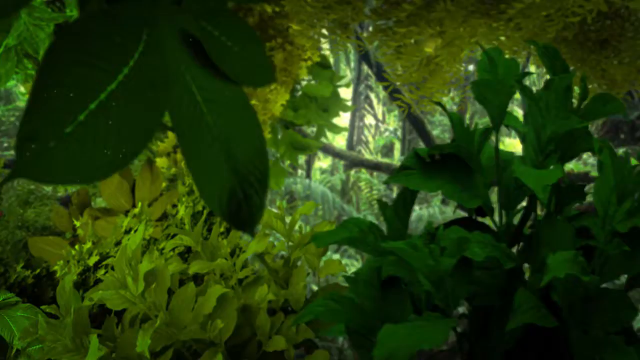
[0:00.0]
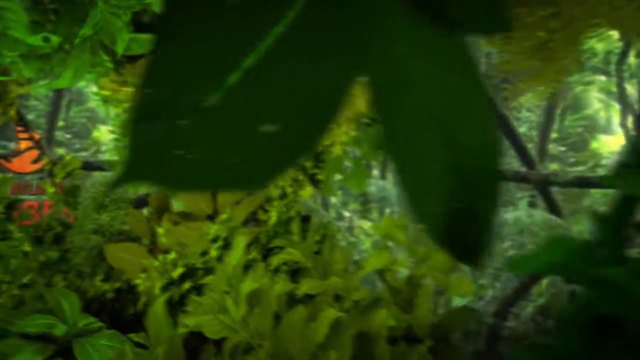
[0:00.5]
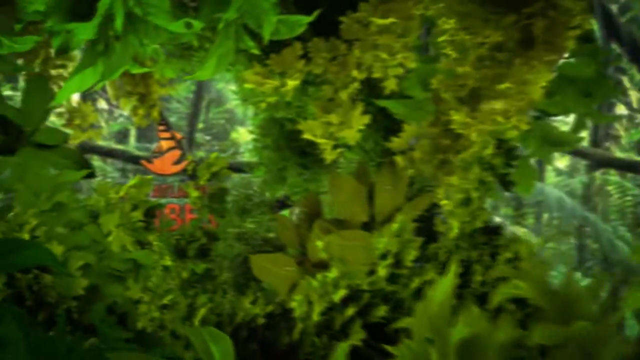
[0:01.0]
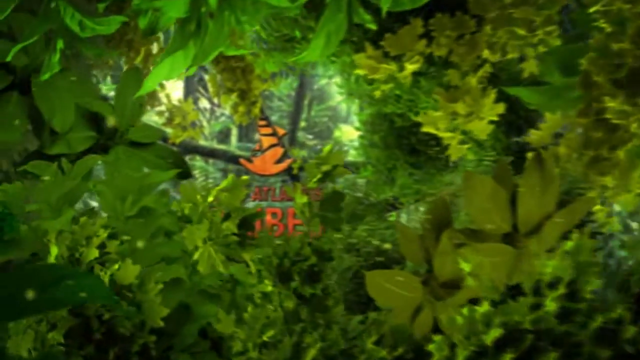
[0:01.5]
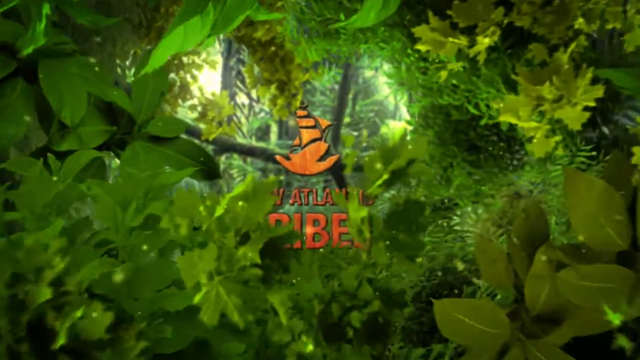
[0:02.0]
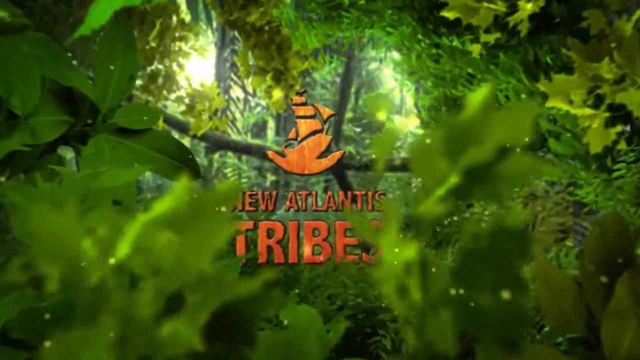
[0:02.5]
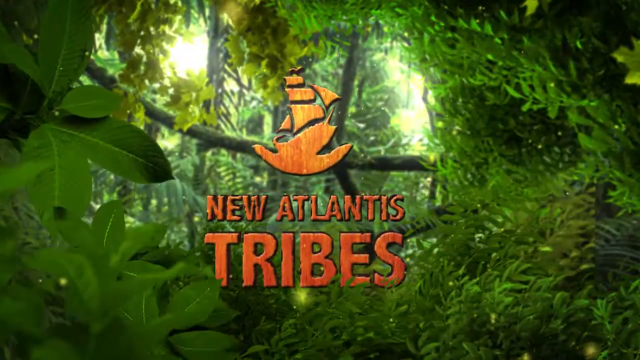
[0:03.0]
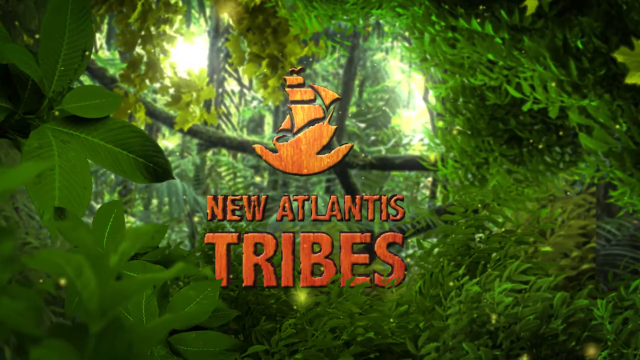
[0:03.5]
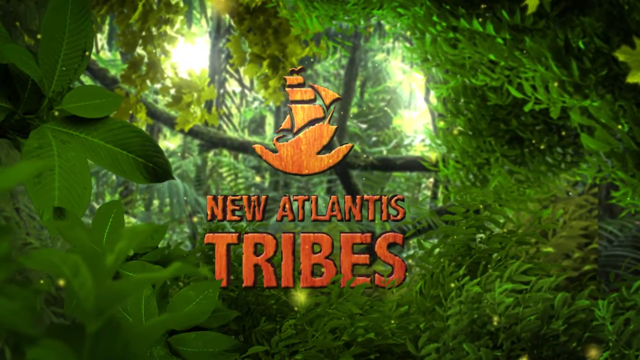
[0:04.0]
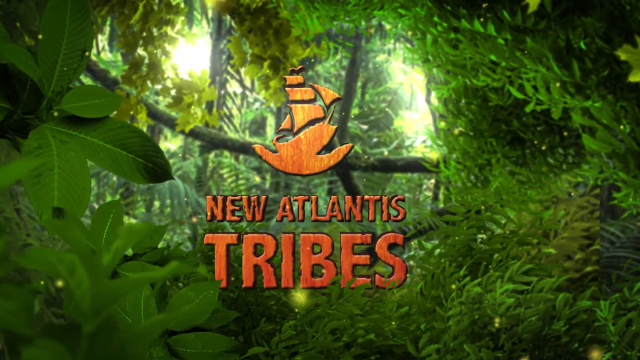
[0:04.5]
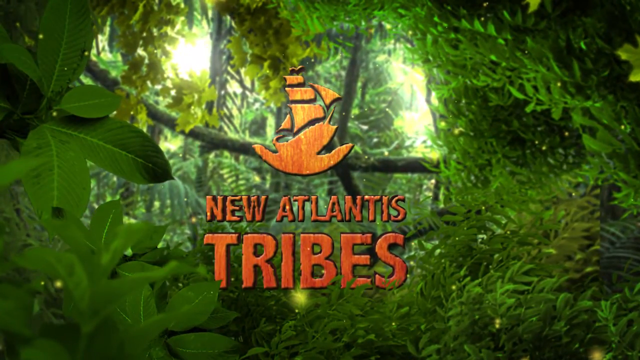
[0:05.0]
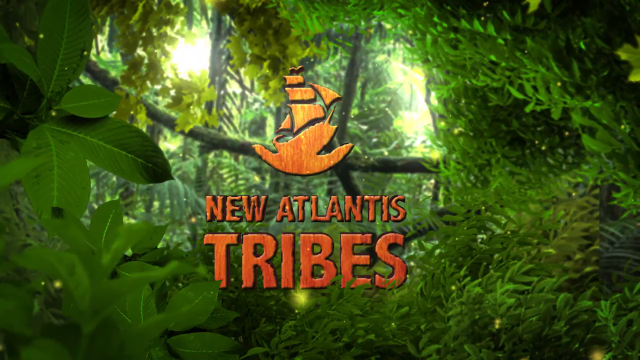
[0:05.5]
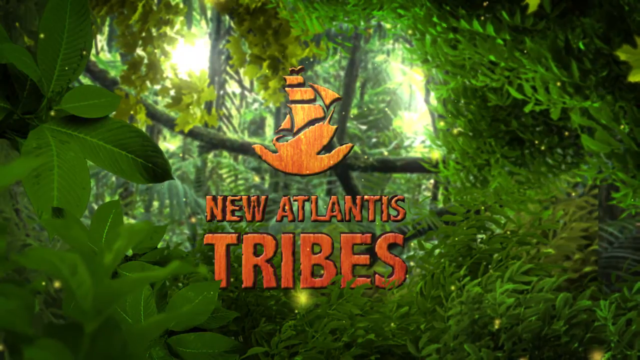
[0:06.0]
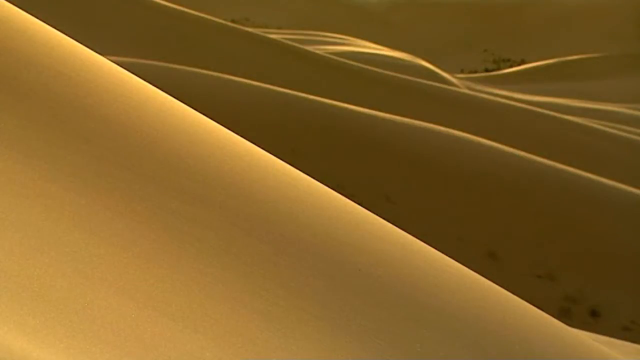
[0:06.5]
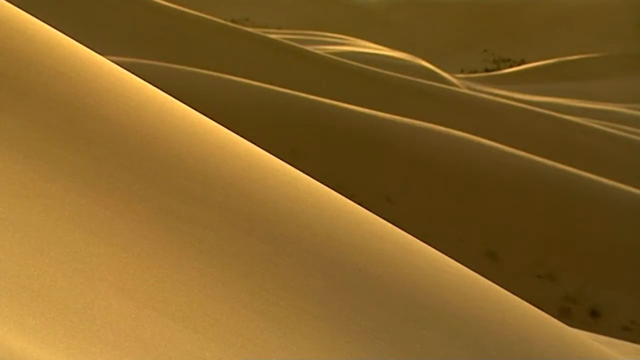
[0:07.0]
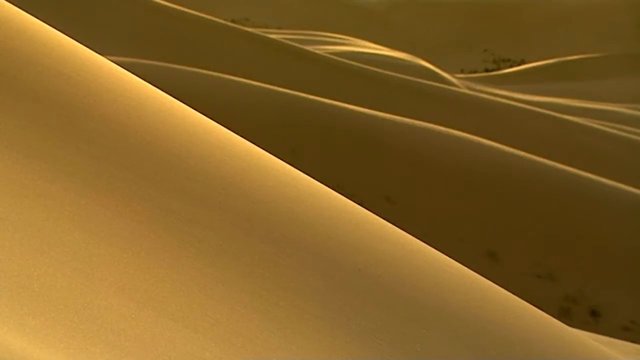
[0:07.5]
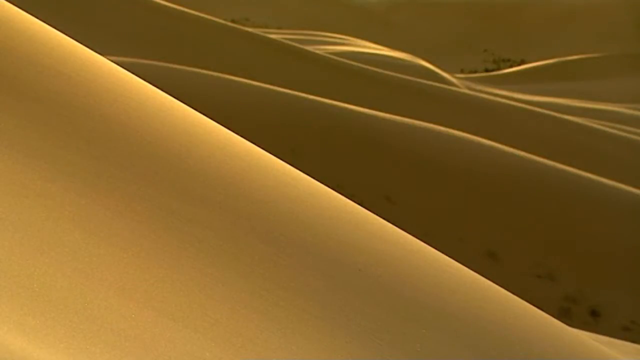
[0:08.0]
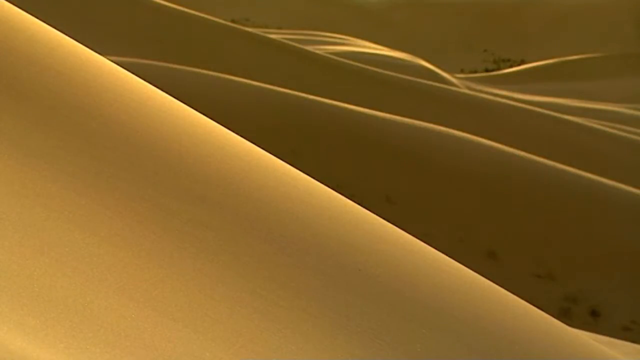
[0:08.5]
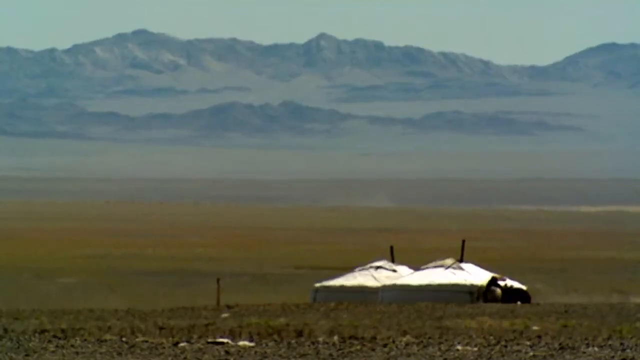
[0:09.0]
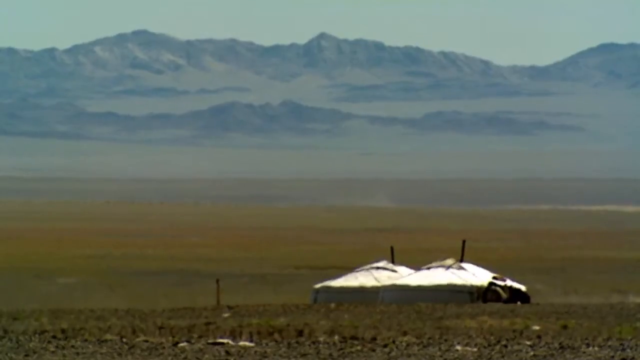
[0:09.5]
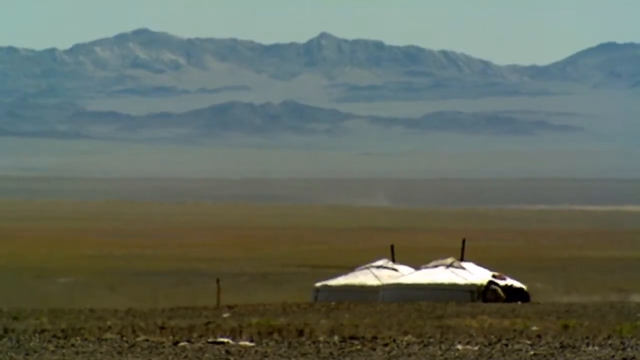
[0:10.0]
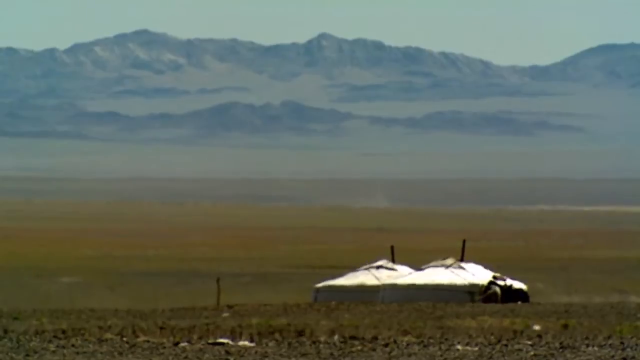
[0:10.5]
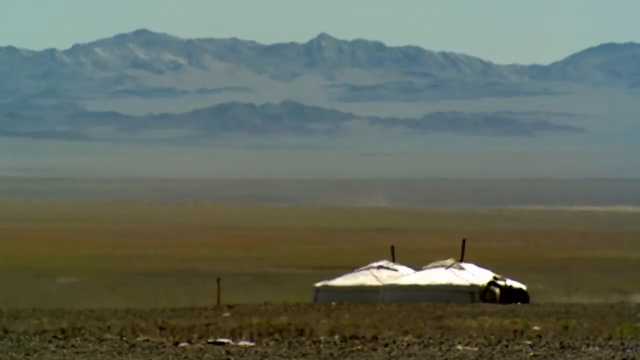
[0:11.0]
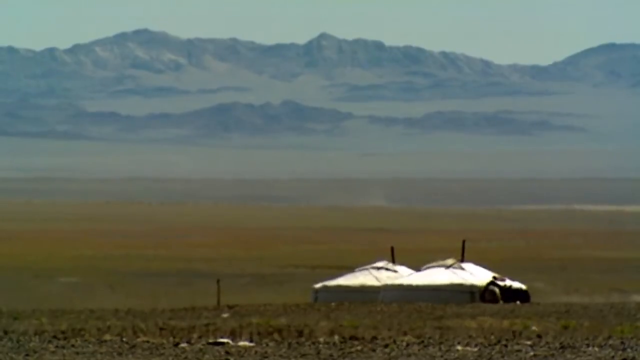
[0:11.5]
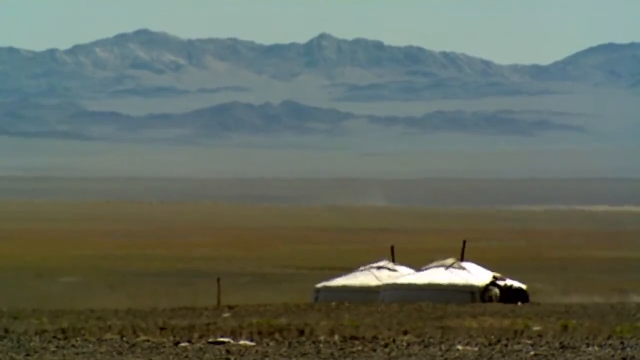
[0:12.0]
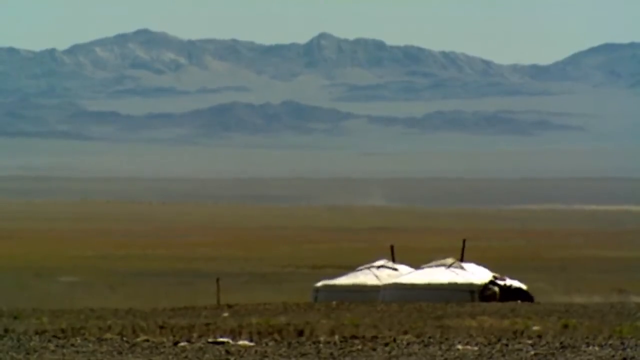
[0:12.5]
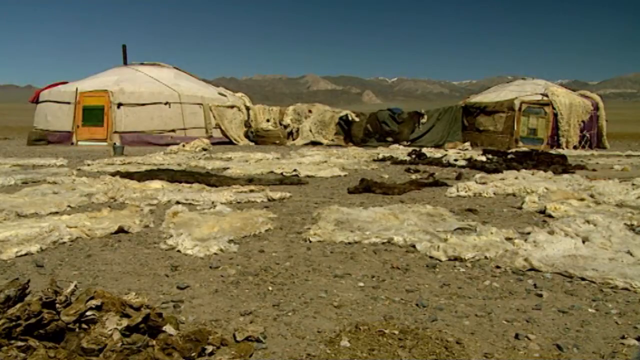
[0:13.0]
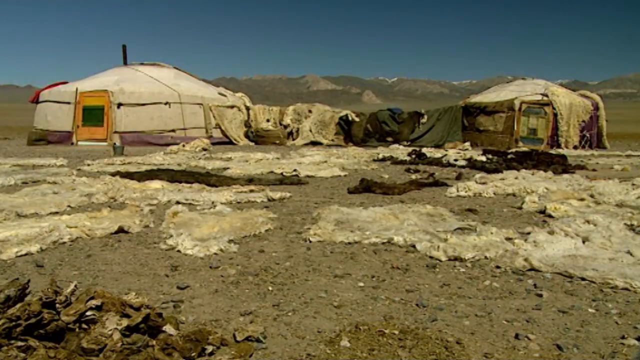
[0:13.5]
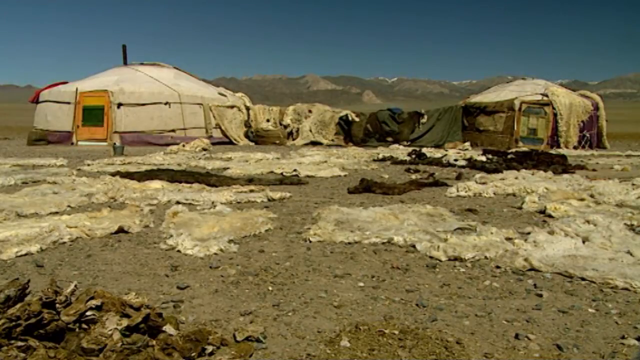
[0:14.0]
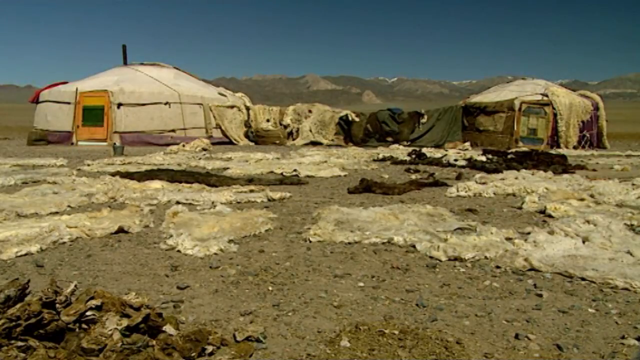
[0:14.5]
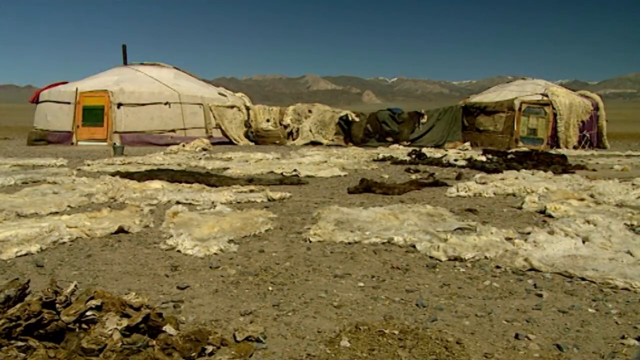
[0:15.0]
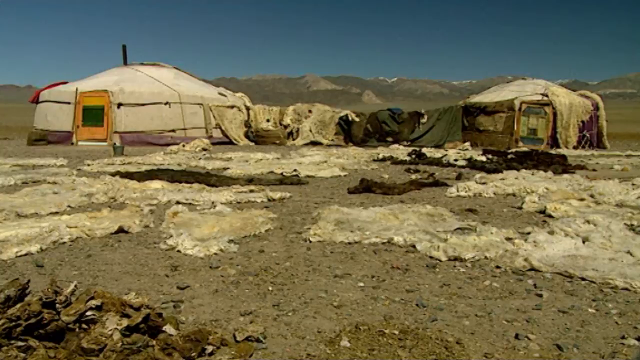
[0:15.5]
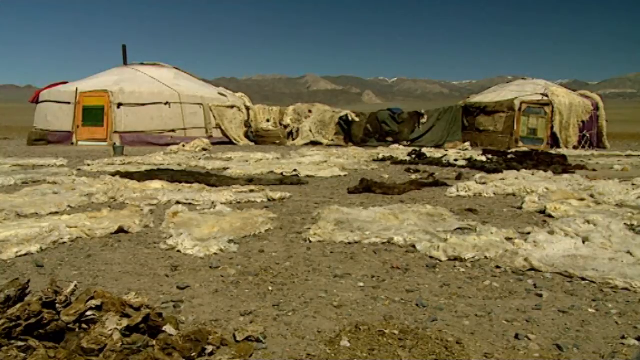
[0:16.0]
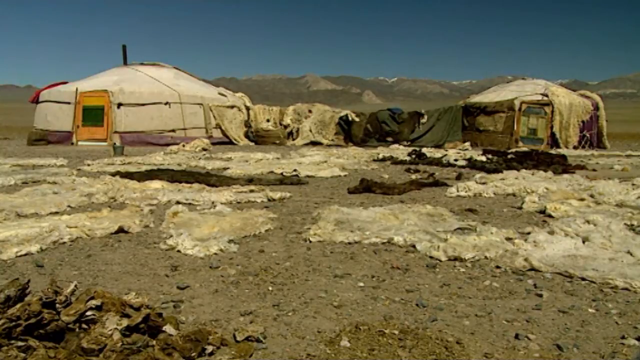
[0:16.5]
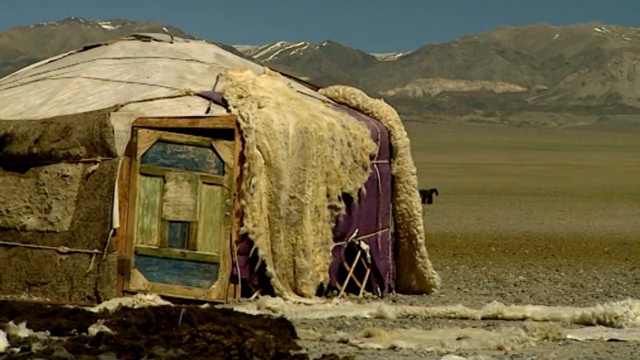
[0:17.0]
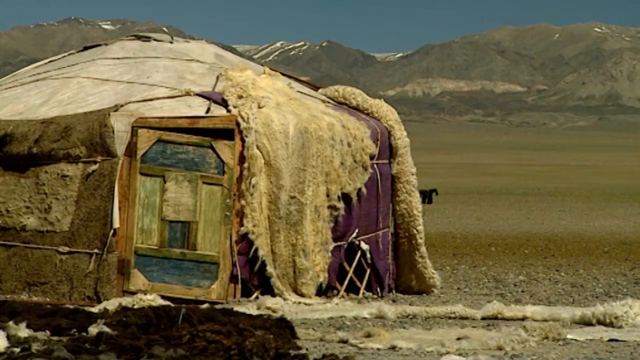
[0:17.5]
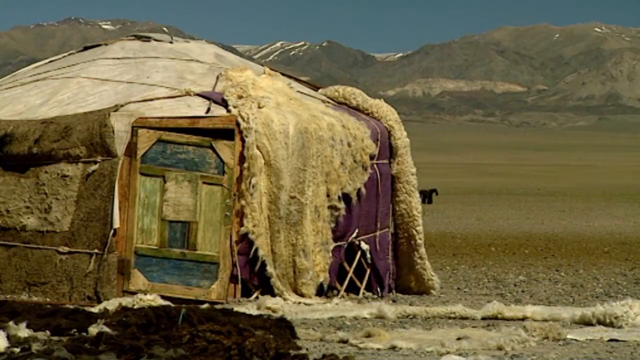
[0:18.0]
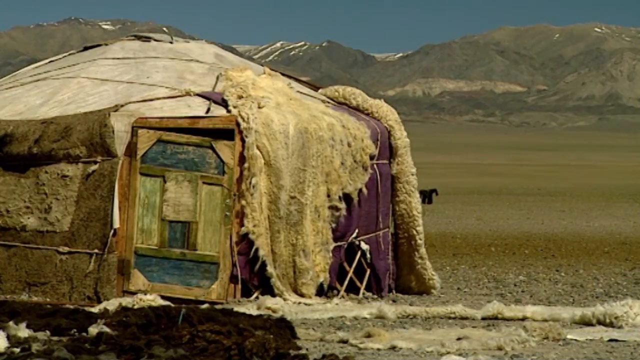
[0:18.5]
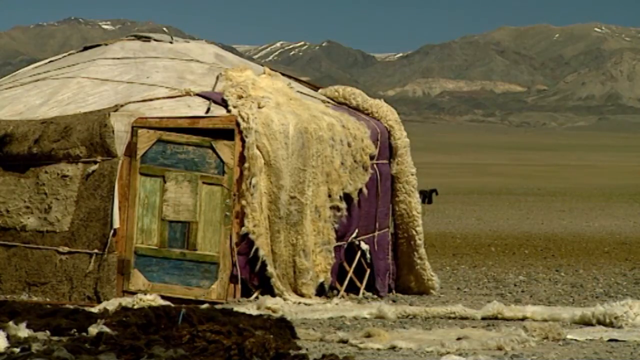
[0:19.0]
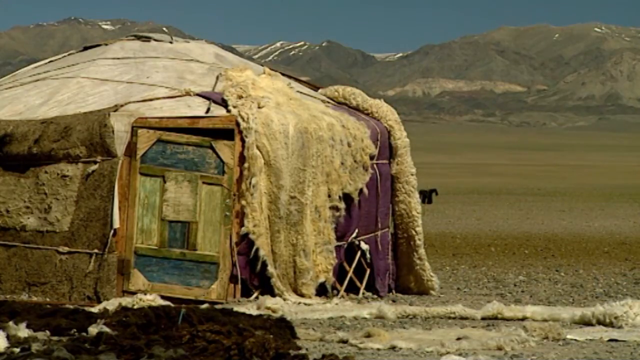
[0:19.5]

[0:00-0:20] The camera opens on a close-up of some leaves or trees, then moves inside a forest, where several trees come into view. A logo appears, and beneath it a word is displayed inside the forest that reads "Atlantis". Next come what appear to be signs in the desert. After a transition, a house in a valley is shown, with mountains on the other side. Waves of heat are visible across the place, even on top of the building. The scene changes to two brown tents with doors fitted in front. Some things are lying outside, apparently being dried. A closer view of a tent follows, showing some things on the ground and some brown things placed on the side of the tent.